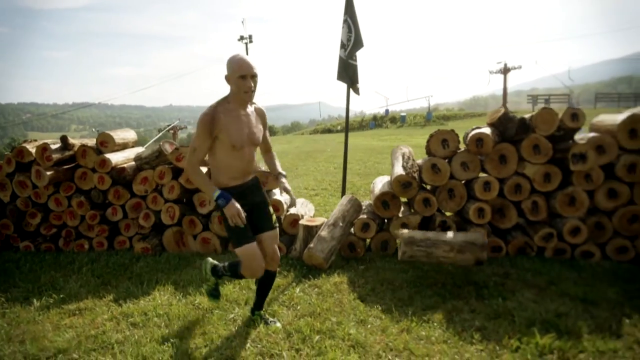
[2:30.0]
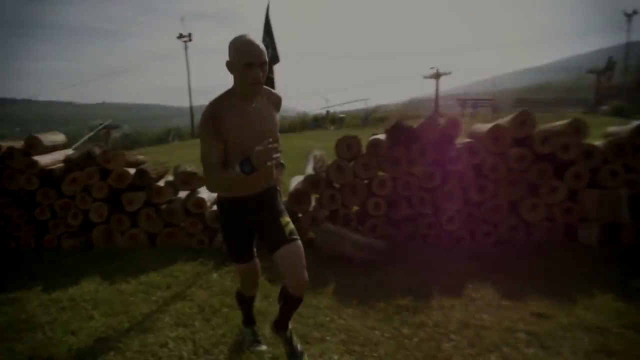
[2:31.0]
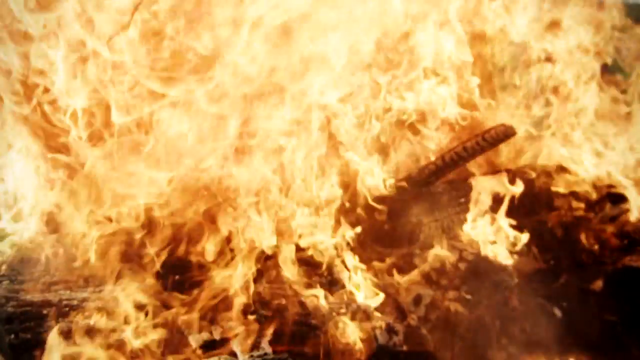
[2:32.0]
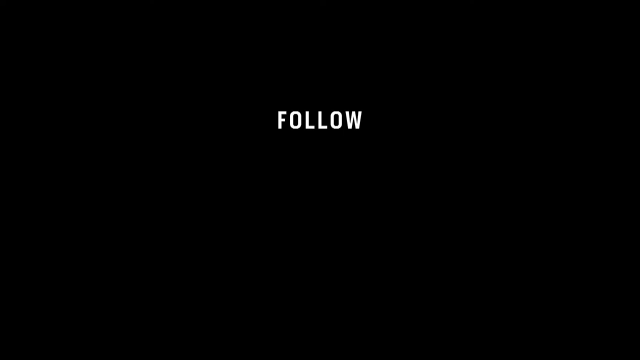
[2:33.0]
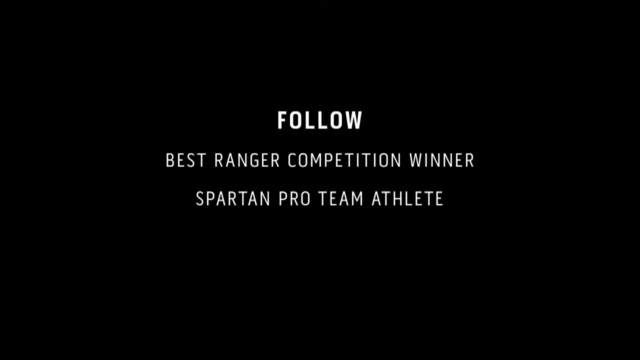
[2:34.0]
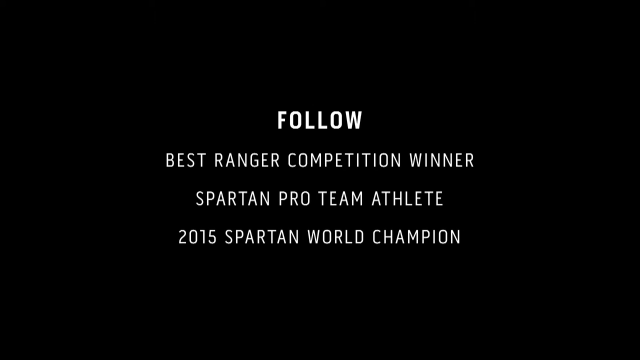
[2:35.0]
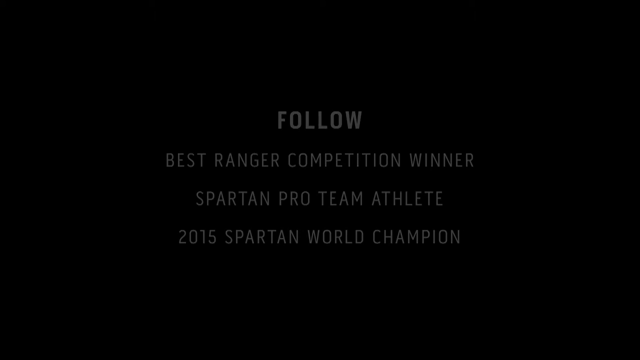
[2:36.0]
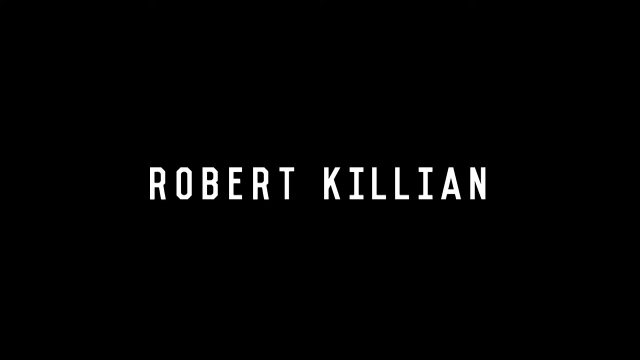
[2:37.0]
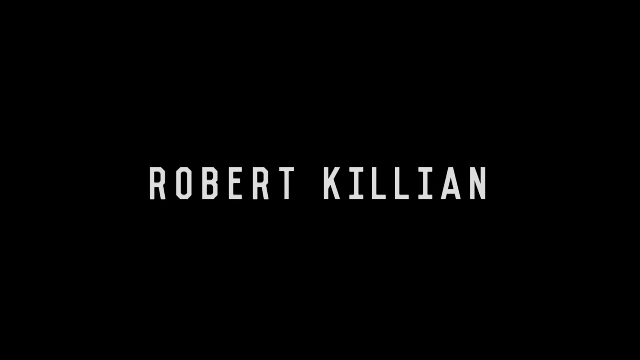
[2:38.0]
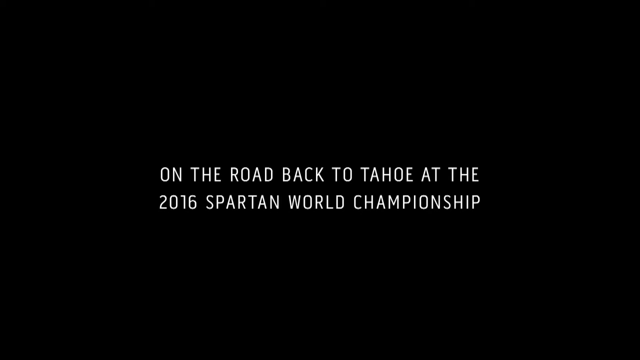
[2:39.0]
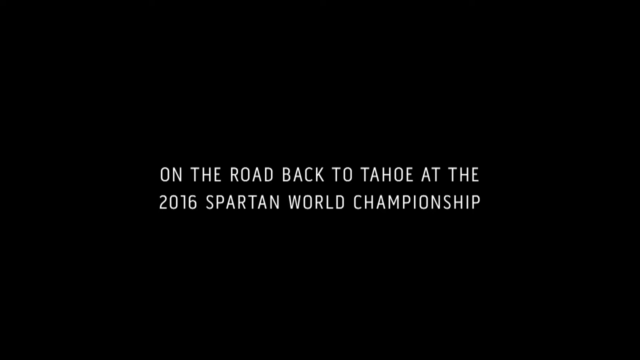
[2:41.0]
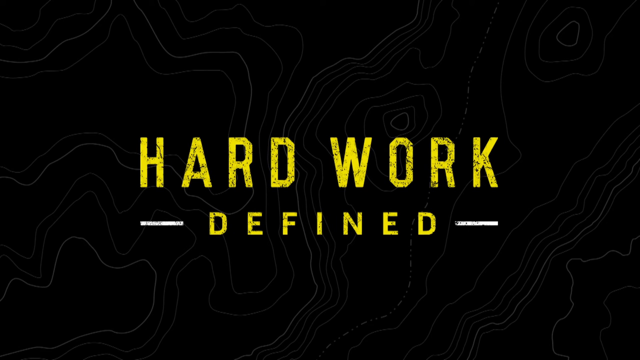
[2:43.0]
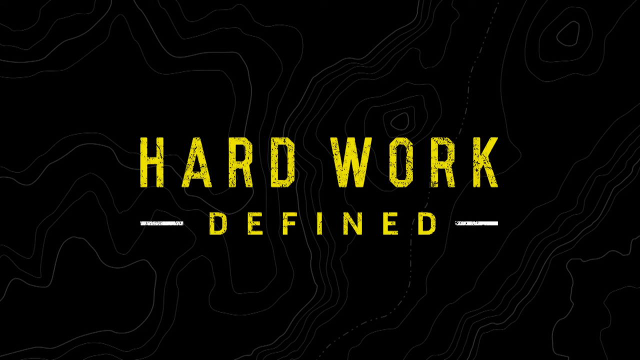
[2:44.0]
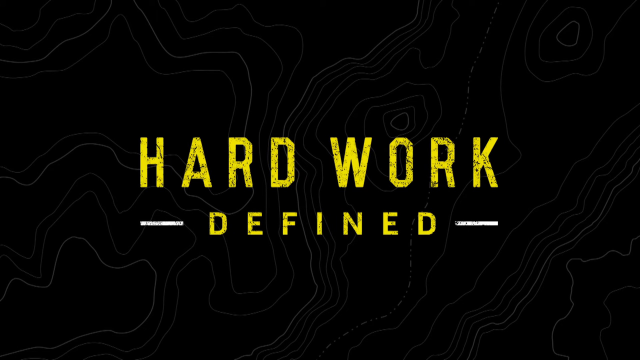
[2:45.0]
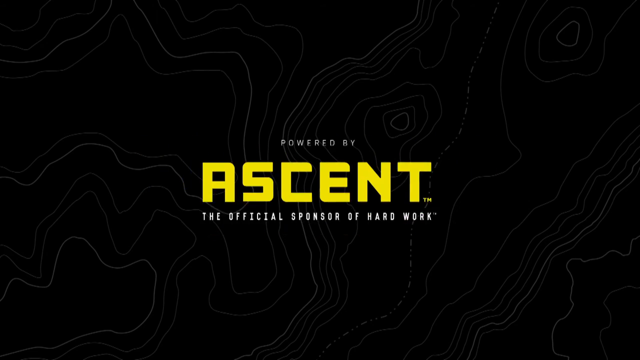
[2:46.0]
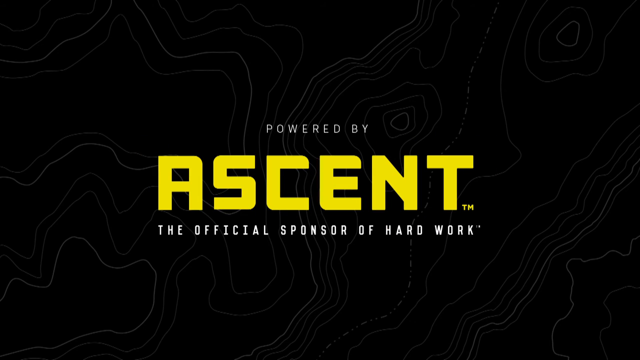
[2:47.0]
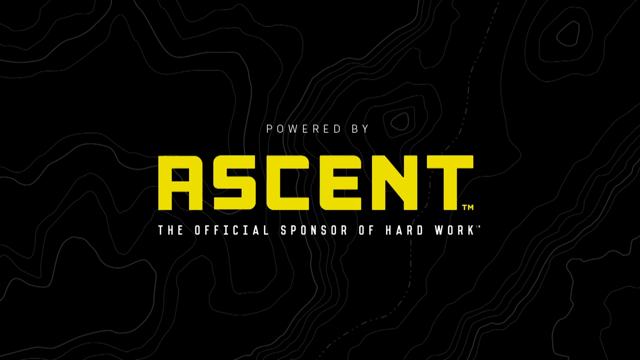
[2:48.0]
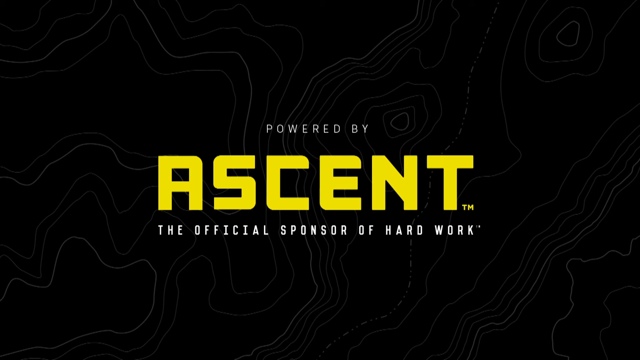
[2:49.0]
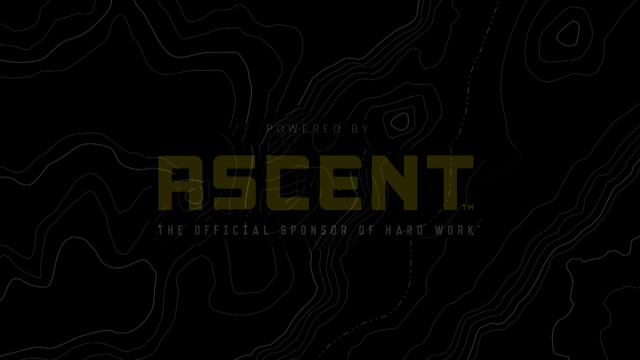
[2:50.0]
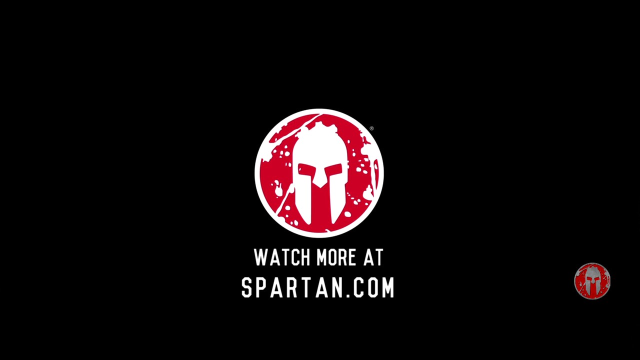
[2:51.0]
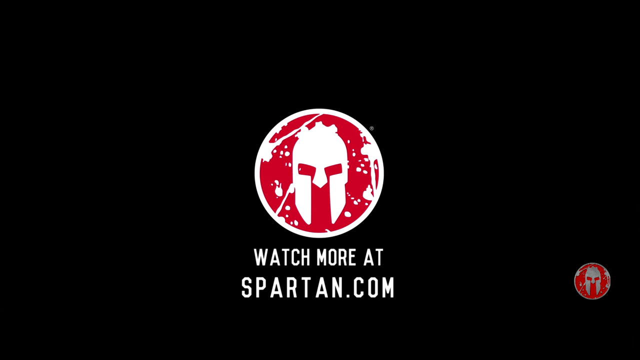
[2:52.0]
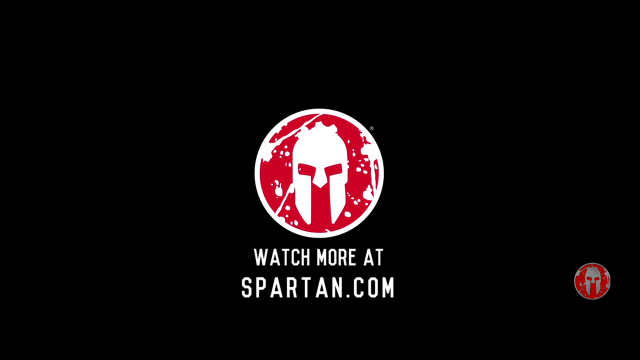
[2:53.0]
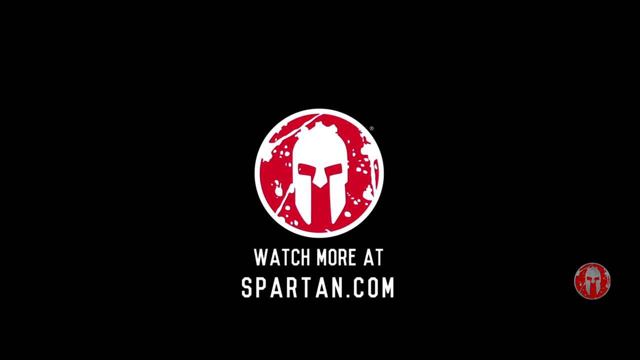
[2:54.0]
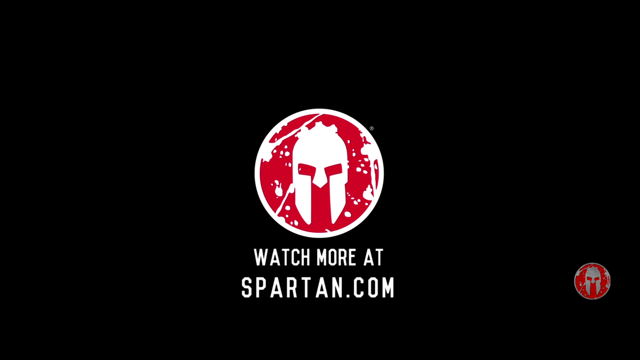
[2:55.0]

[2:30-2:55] After dropping the wooden log, he begins jogging toward the camera and fades out. A zoomed-in picture of a large fire burning follows, leading directly to a black screen with white text reading "best Ranger competition winner Spartan pro team athlete 2015 Spartan world champion Robert Killian." That text disappears and different text reads "on the road back to Tahoe at the 2016 Spartan world championship." That fades away, and yellow text appears reading "hard work defined," with two lines to the left and right of the word "defined"; it zooms out. Another set of text reads "powered by Ascent the official sponsor of hard work." That fades out, and a Spartan logo appears: a circle with what looks almost like Spartan gear in the center. Underneath, it reads "watch more at Spartan.com."